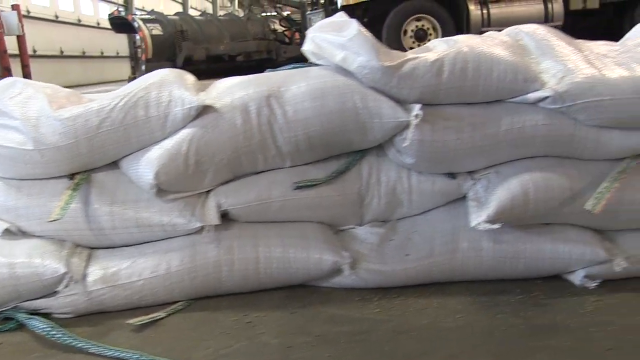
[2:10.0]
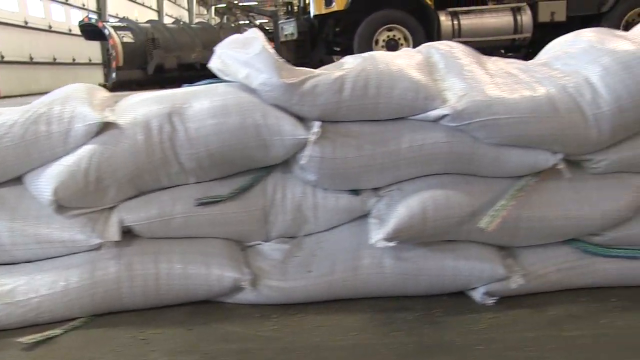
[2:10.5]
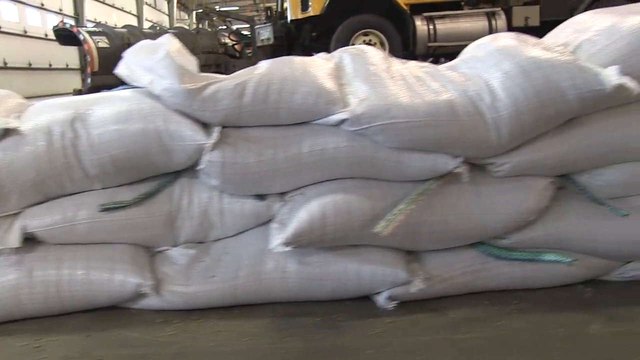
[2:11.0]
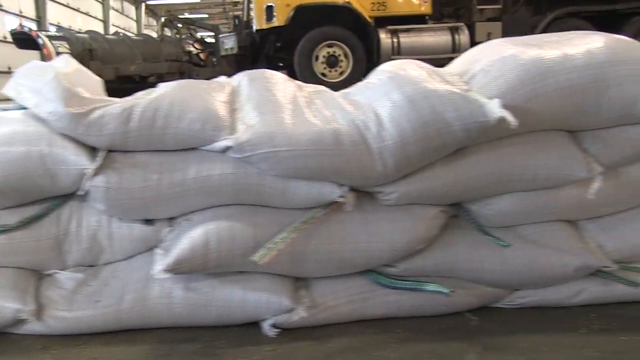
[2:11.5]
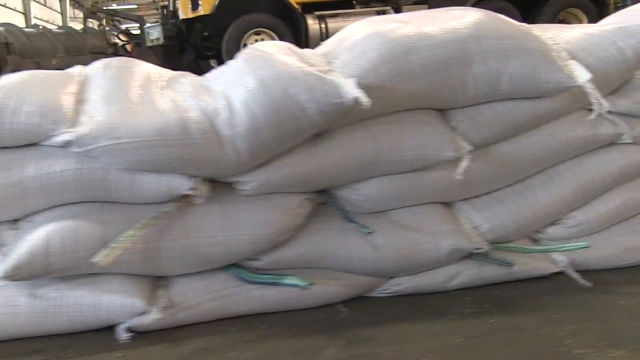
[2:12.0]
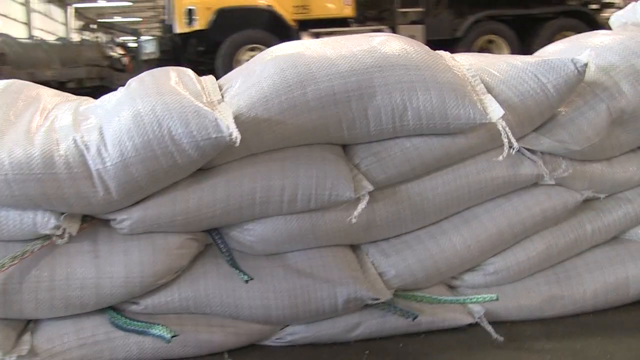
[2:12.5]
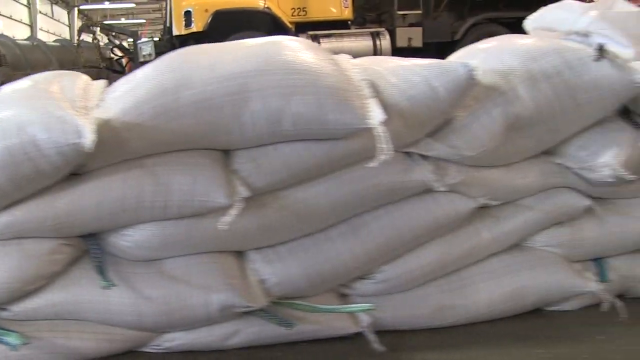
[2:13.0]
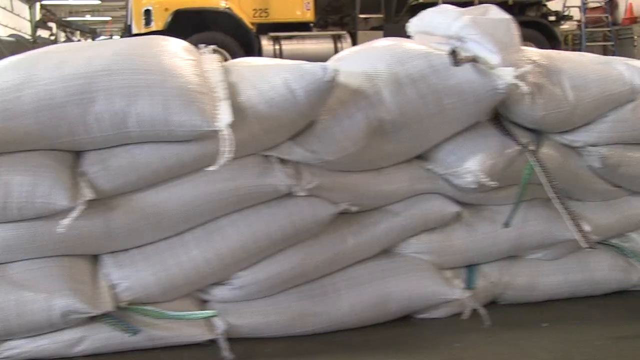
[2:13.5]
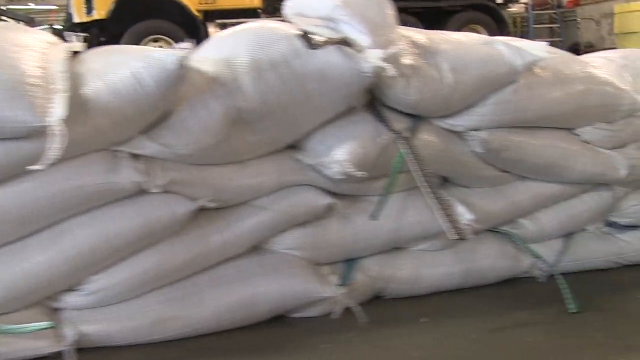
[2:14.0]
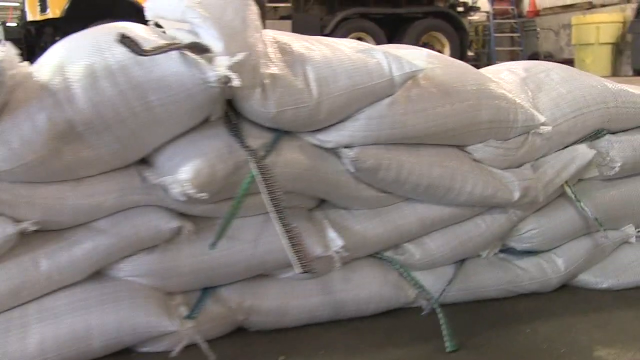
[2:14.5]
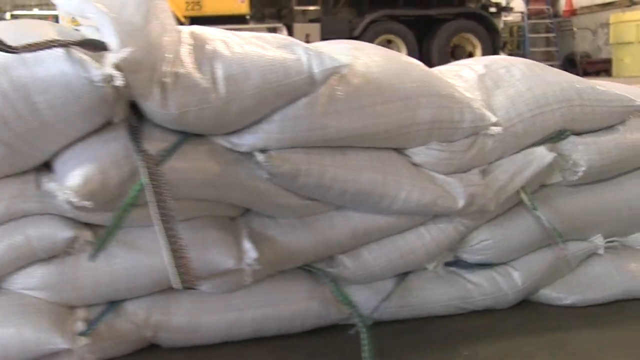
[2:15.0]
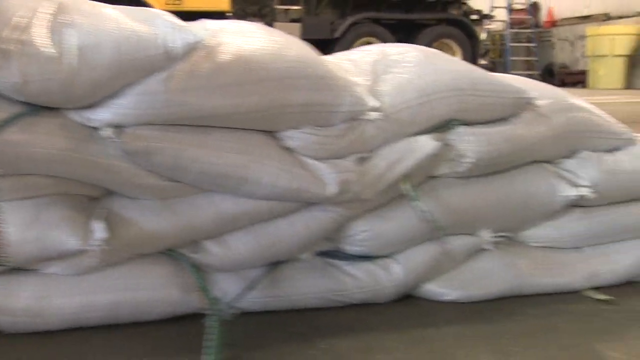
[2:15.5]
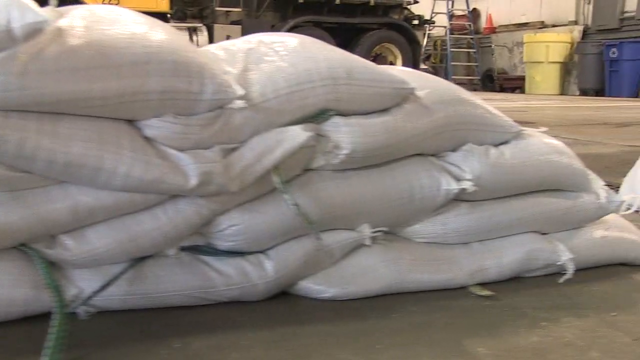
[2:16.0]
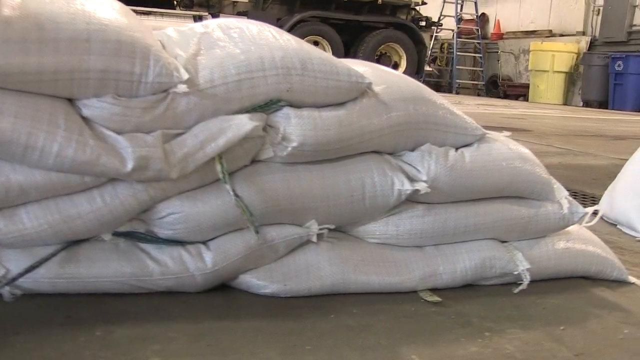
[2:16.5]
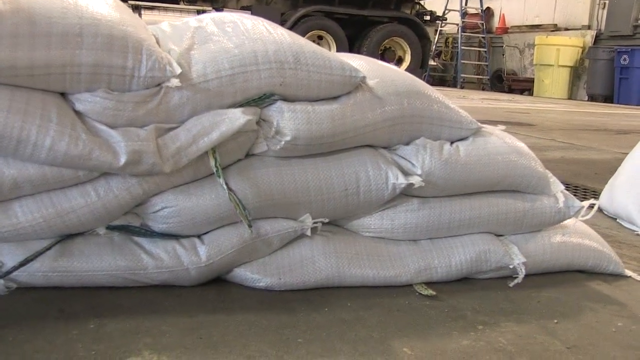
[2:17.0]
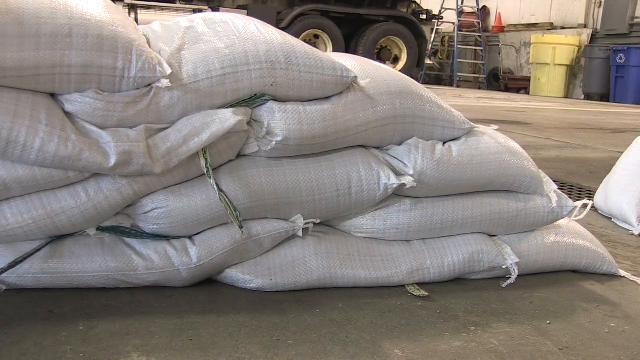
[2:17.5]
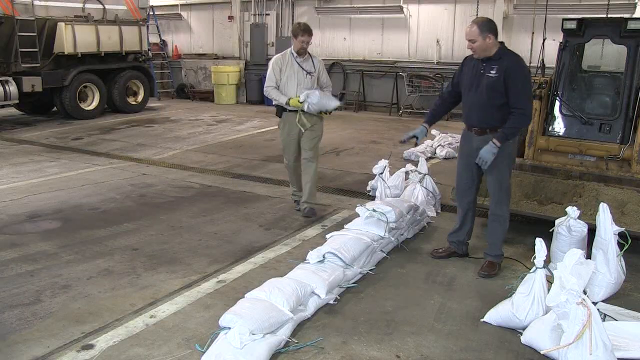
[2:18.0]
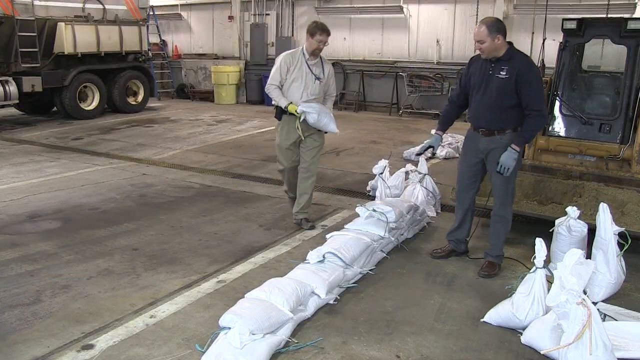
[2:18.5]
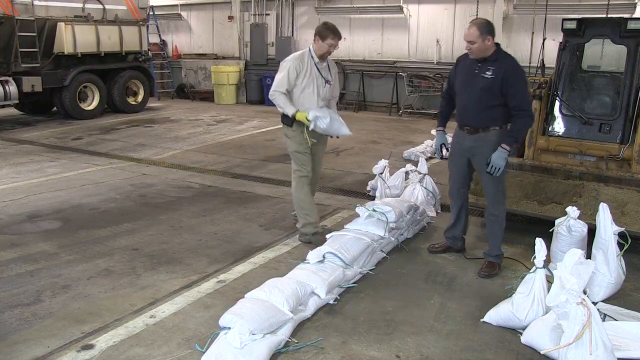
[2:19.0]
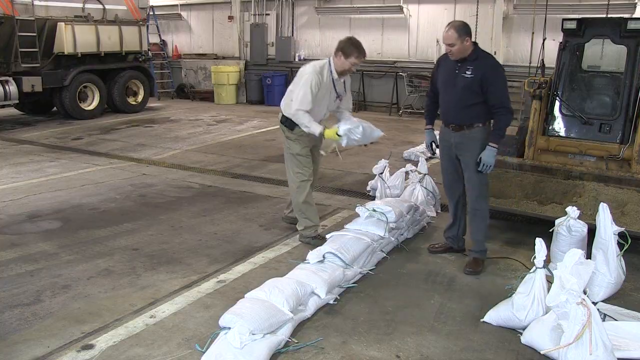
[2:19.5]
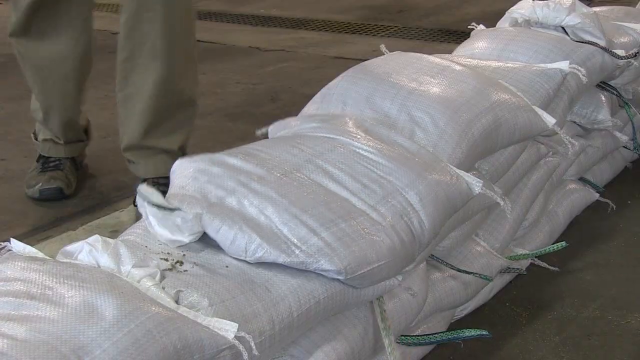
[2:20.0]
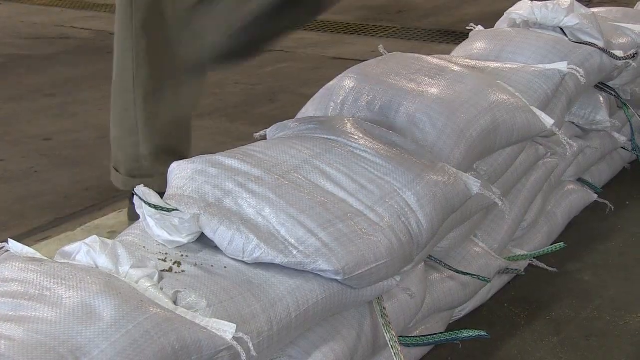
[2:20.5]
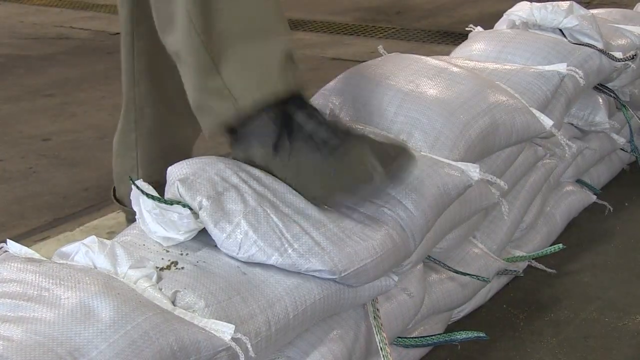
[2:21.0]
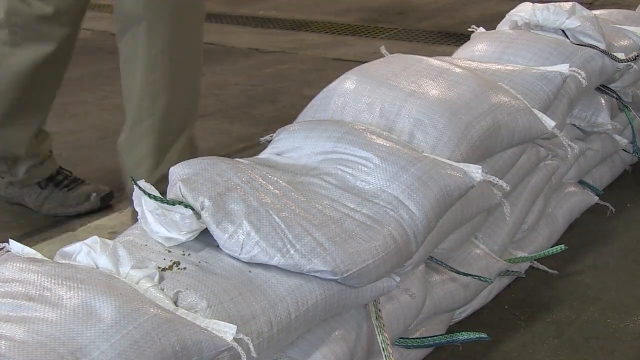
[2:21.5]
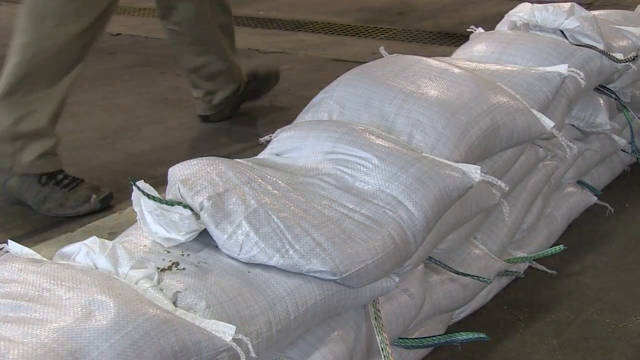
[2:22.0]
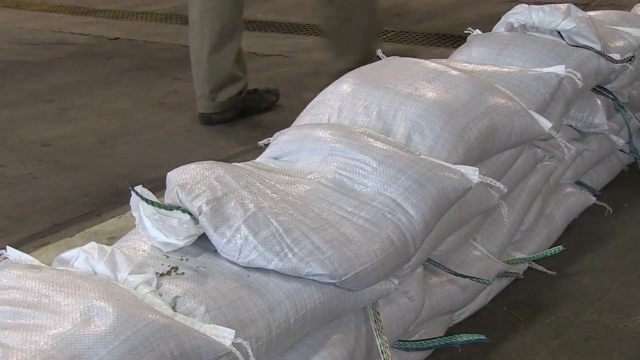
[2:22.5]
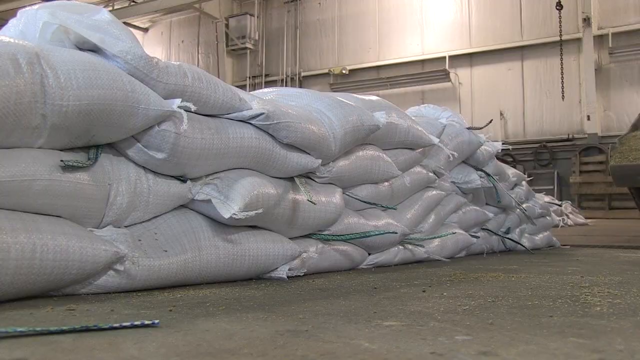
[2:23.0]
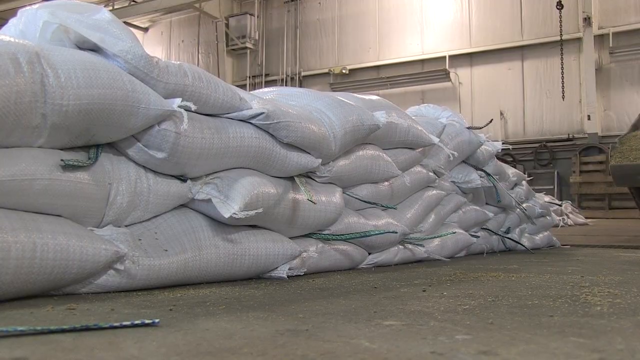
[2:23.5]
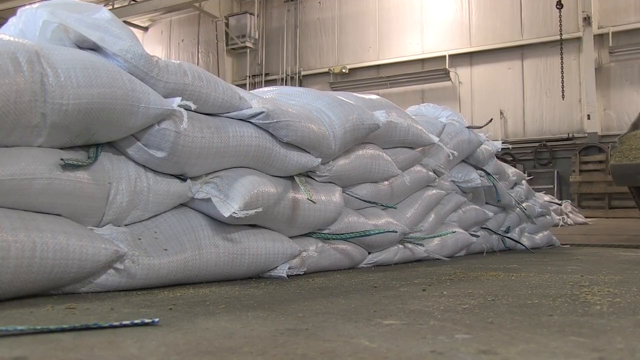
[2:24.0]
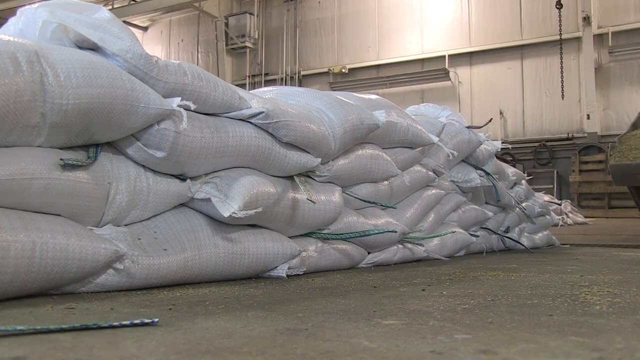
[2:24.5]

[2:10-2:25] The speaker talks as one of his co-workers comes by with another sandbag. Doing as the speaker did, the co-worker places the sandbag horizontally on top of sandbags already placed in the growing wall and steps on it with his booted foot. The speaker talks and gestures toward the sandbags as the co-worker places down another sandbag.